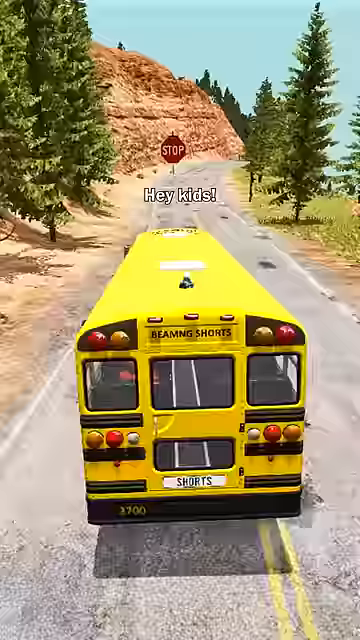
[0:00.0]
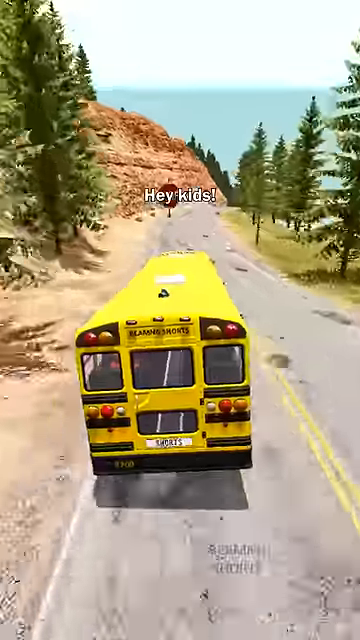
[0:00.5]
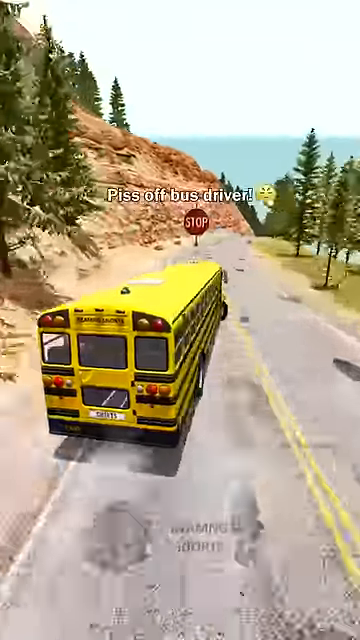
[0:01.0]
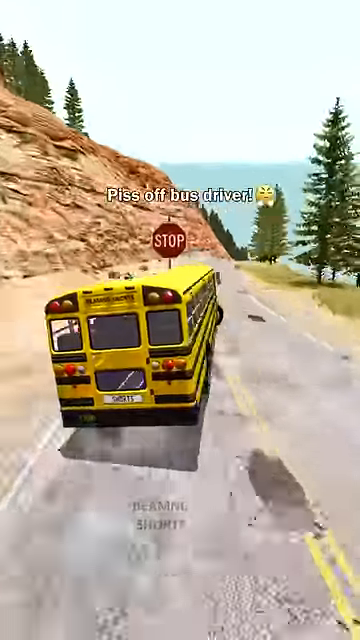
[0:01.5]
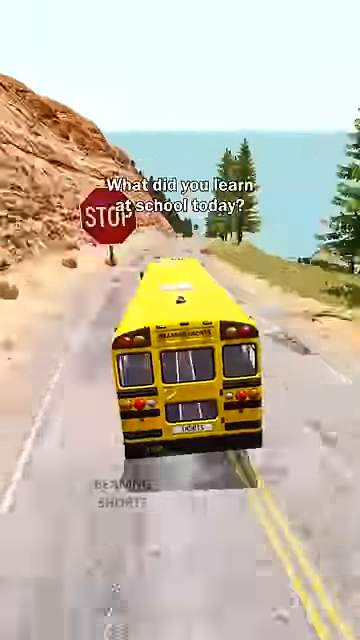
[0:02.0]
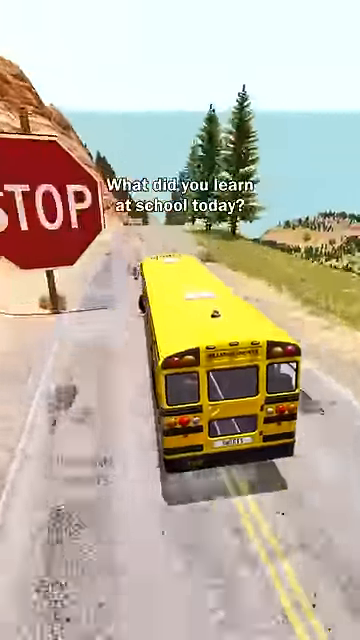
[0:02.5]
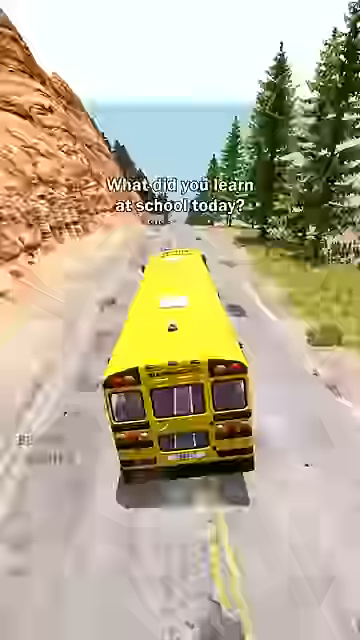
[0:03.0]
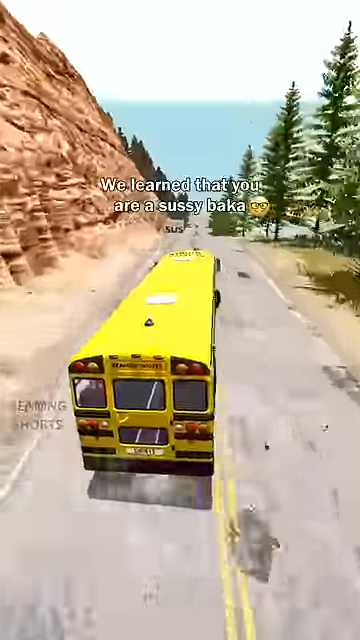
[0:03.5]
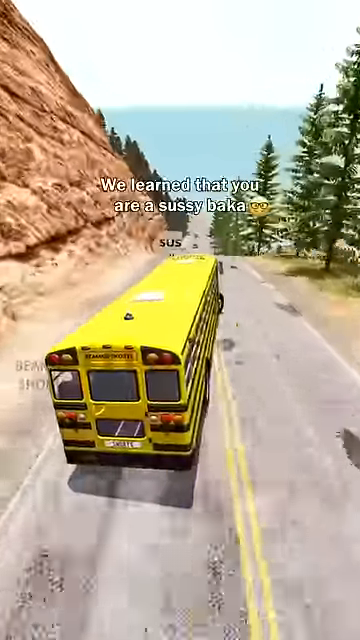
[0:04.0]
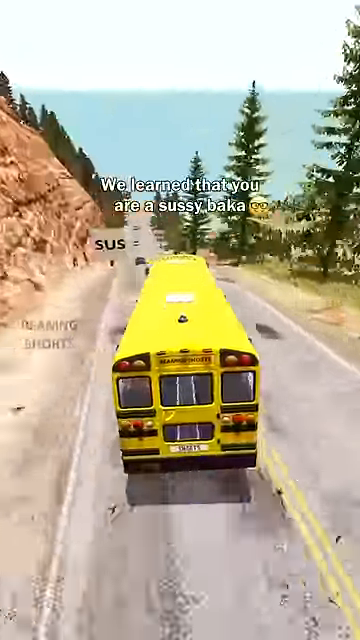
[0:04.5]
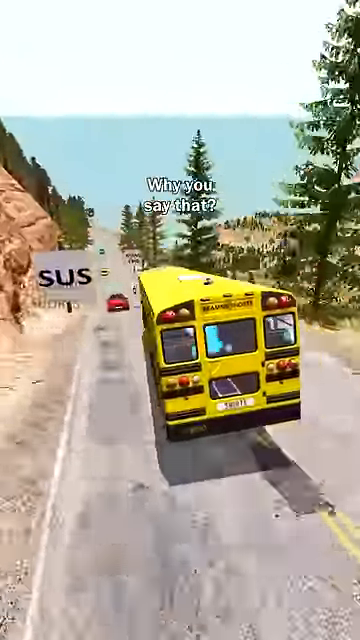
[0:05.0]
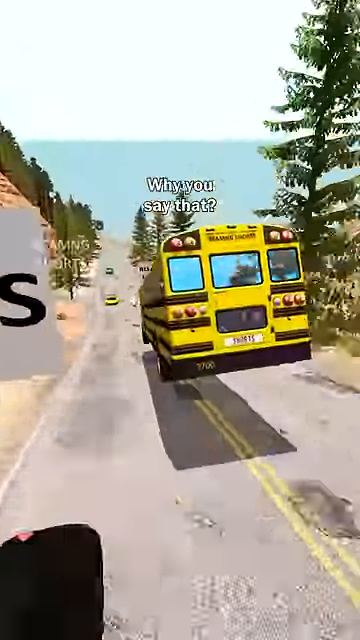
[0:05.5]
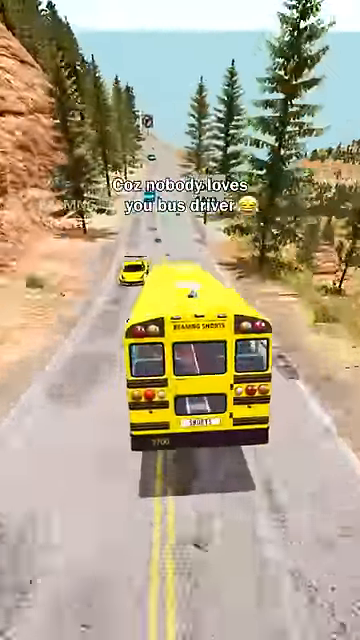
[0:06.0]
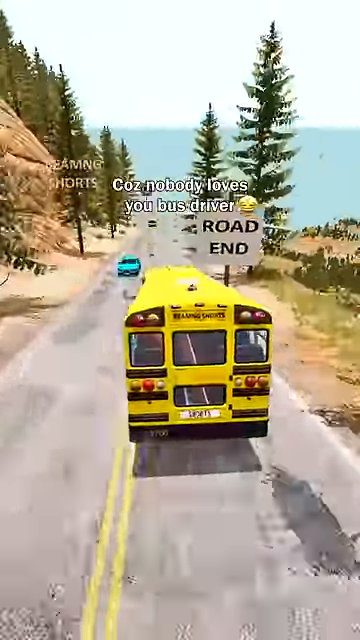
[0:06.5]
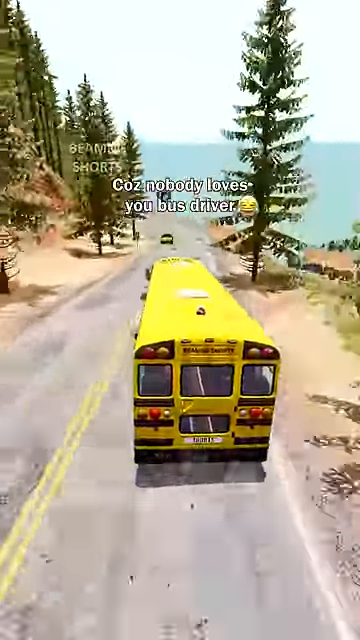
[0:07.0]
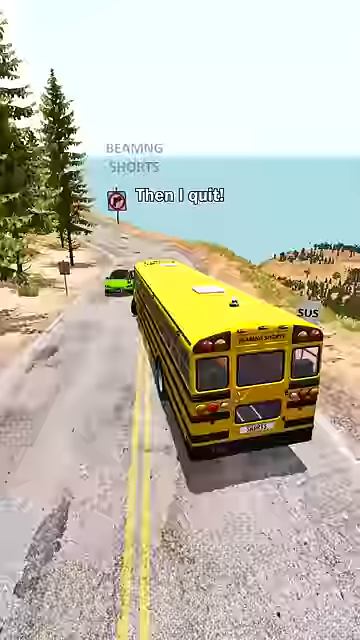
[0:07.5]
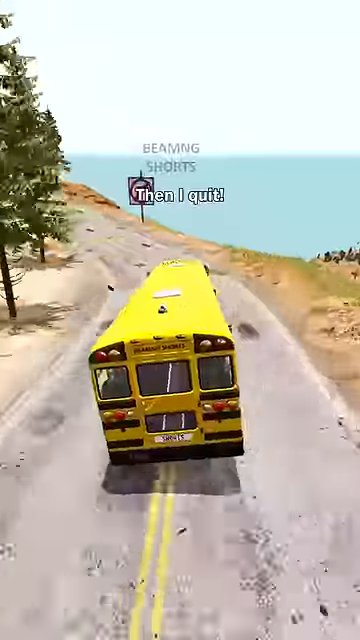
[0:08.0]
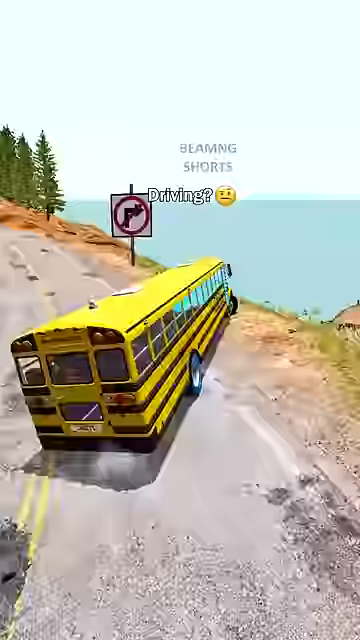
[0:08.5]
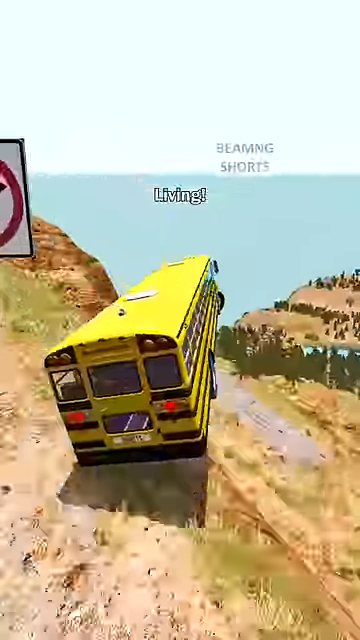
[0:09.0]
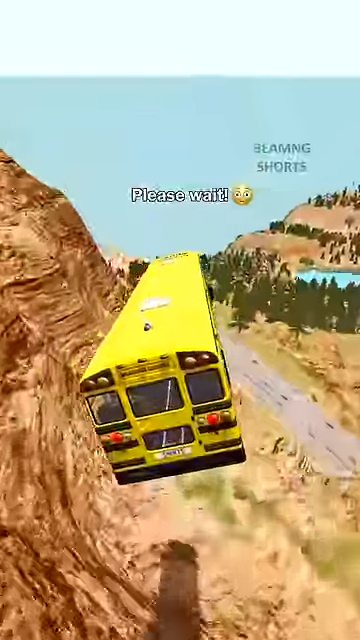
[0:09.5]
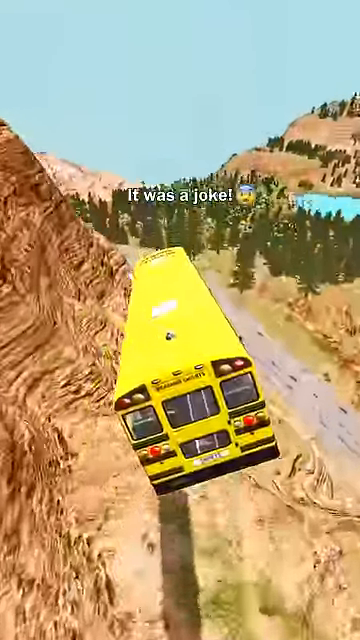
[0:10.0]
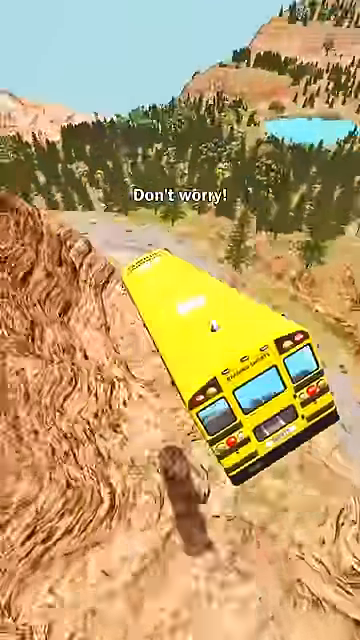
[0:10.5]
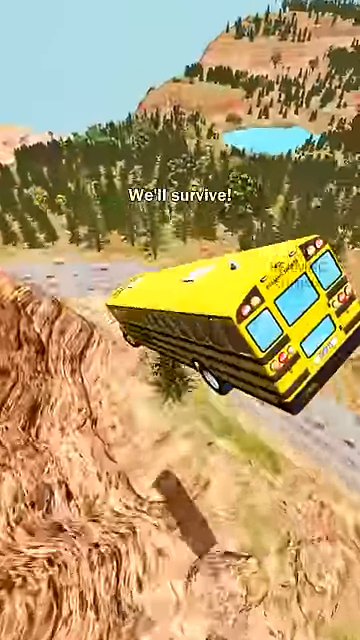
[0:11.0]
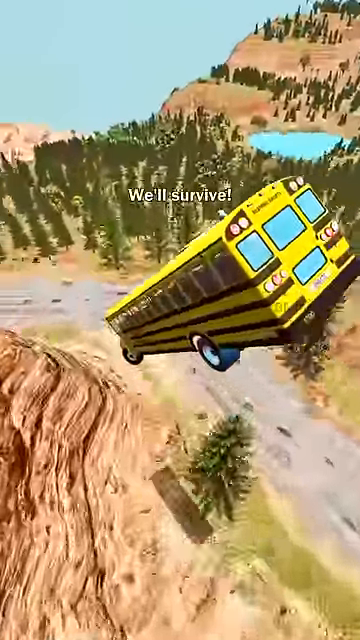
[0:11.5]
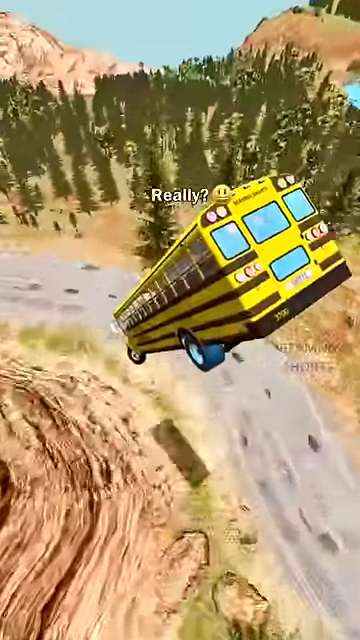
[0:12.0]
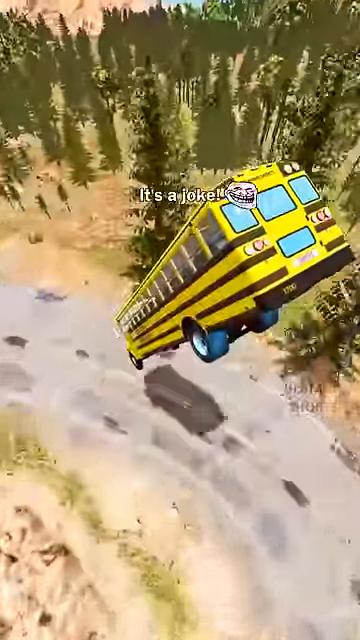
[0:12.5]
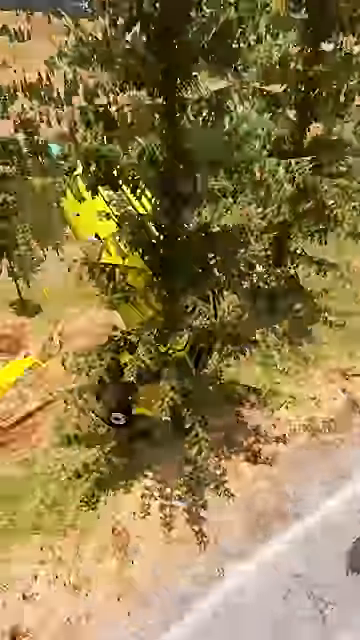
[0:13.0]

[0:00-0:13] In a video game, the player controls a school bus in an incredibly frantic downhill drive. Text flashes across the screen, beginning with "hey kids, piss off bus drivers" and an angry face, followed by "What did you learn at school today? We learned that you are a sussy baka. But you say that cause nobody loves you bus driver." More text follows, including "Please wait. It was a joke. Don't worry. We'll survive. Really? It's a joke." The entire time, the bus careens down an in-game road with no regard for safety laws; it goes flying over a cliff, crashes into a tree, and wraps around the tree in a surprisingly in-depth physics collision. Along the way, a giant stop sign is completely ignored, and a sign saying "road end" with a no right turn signal appears, showing that the game is all about driving like a maniac.